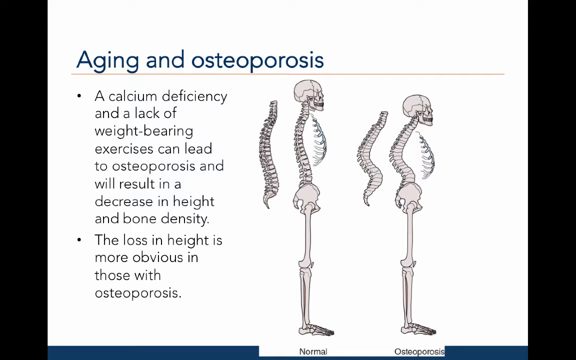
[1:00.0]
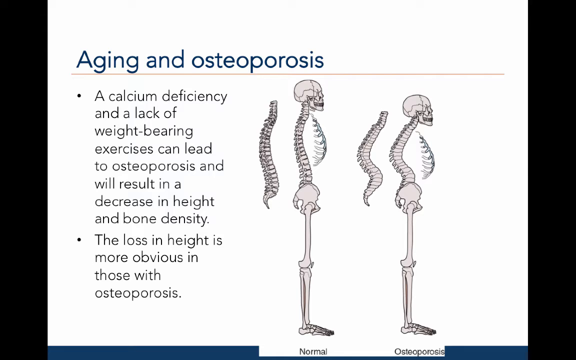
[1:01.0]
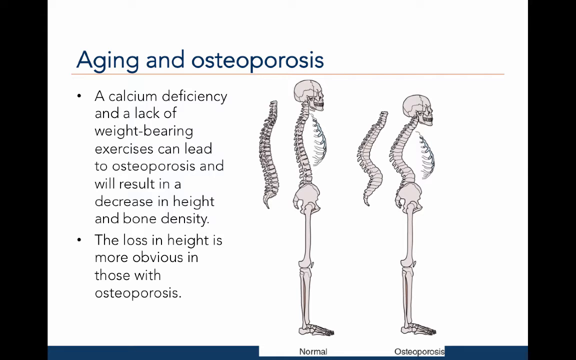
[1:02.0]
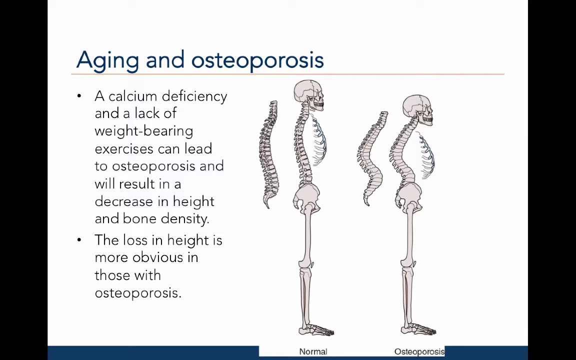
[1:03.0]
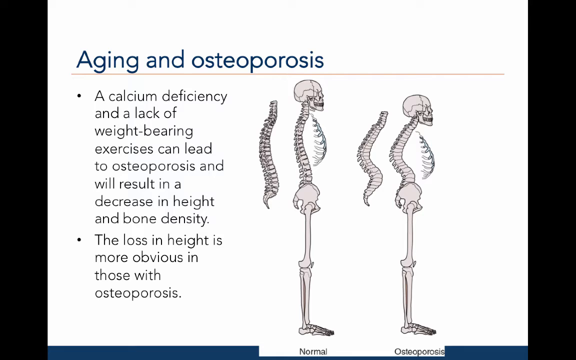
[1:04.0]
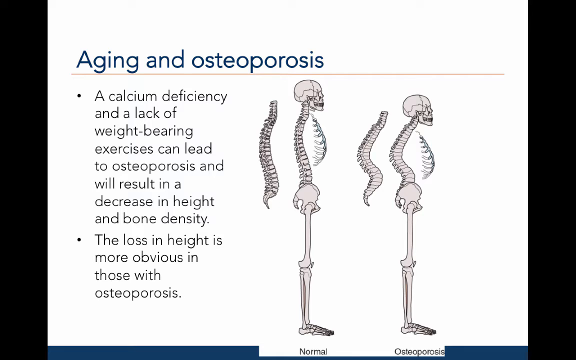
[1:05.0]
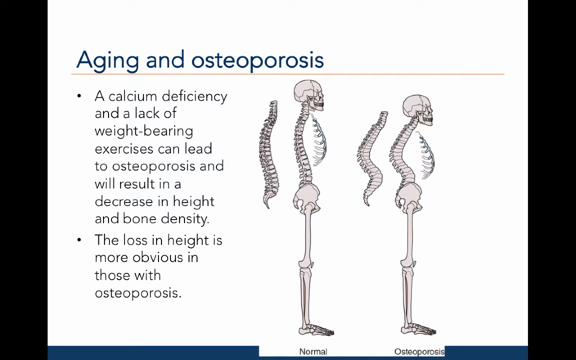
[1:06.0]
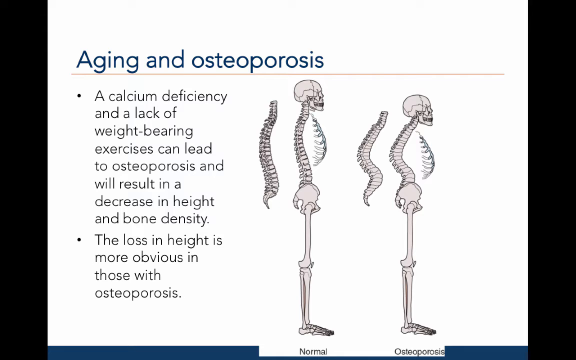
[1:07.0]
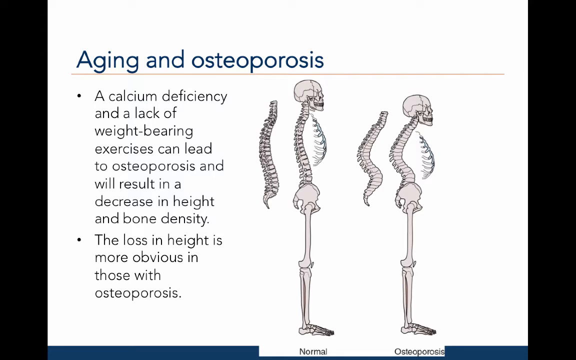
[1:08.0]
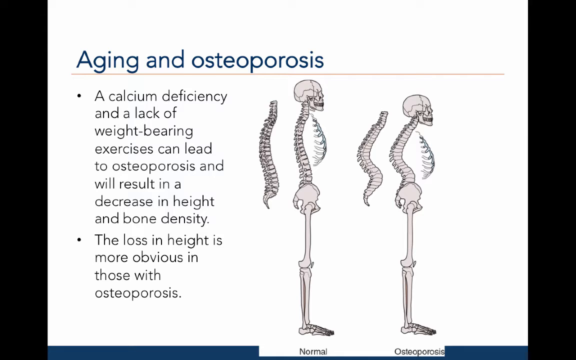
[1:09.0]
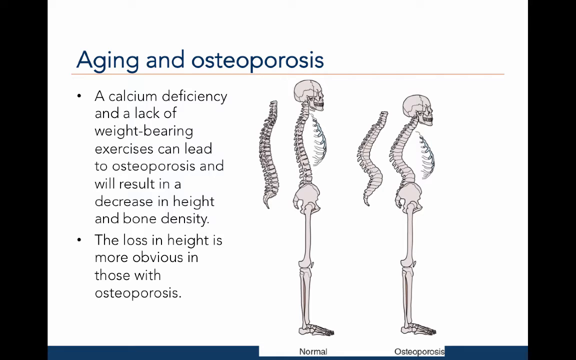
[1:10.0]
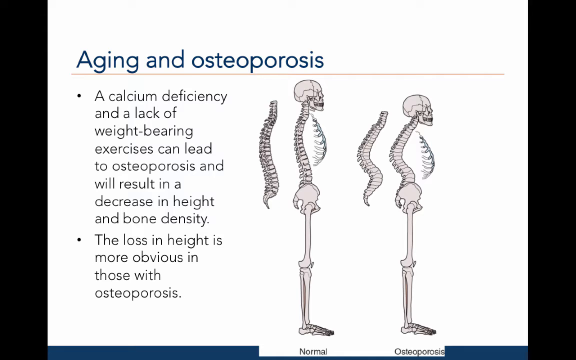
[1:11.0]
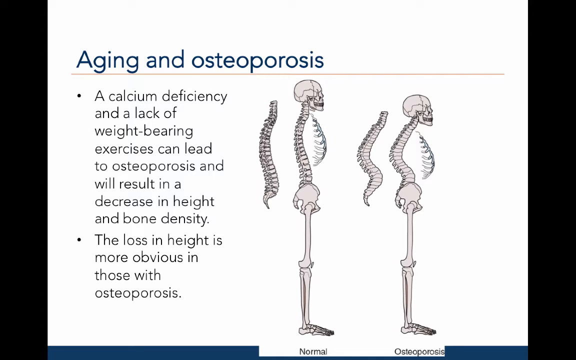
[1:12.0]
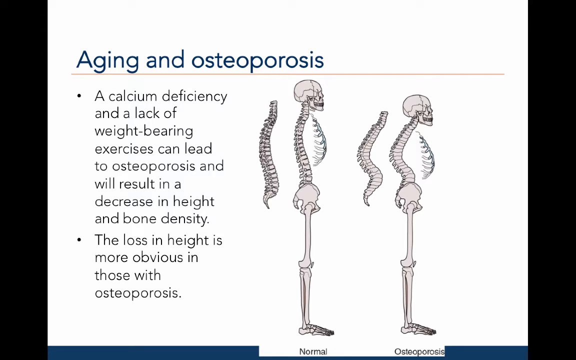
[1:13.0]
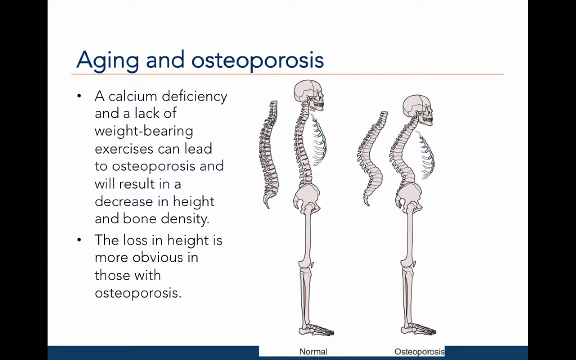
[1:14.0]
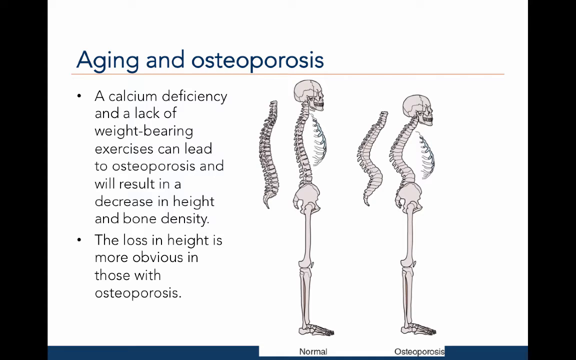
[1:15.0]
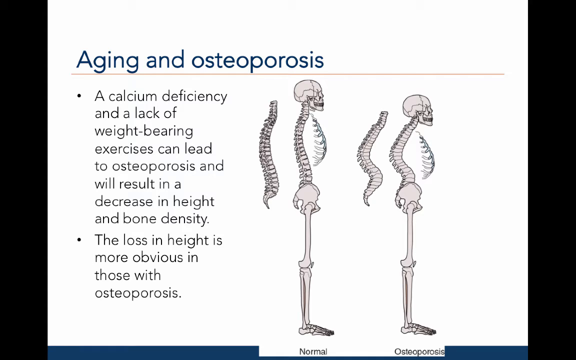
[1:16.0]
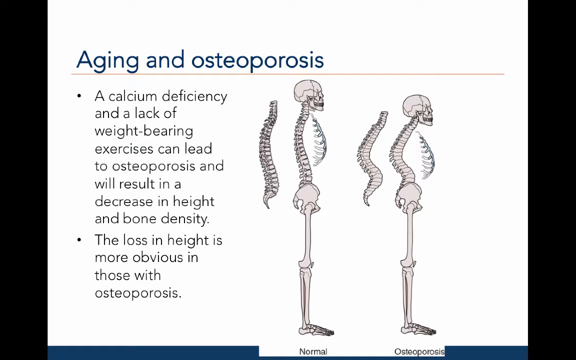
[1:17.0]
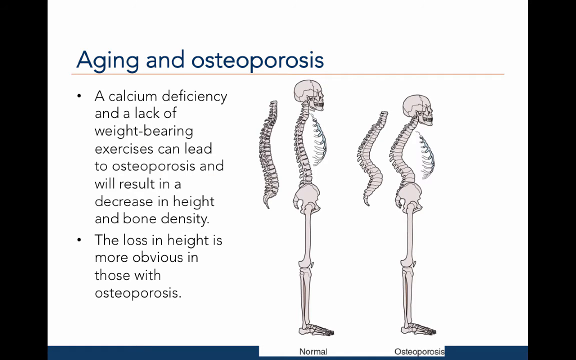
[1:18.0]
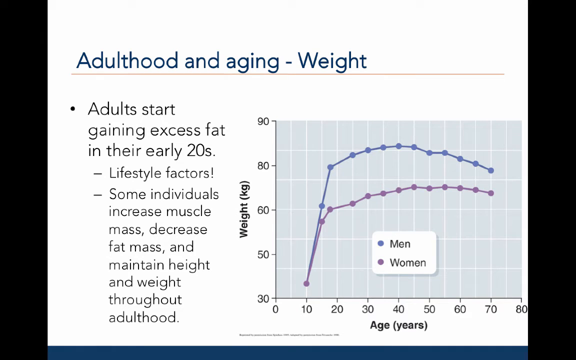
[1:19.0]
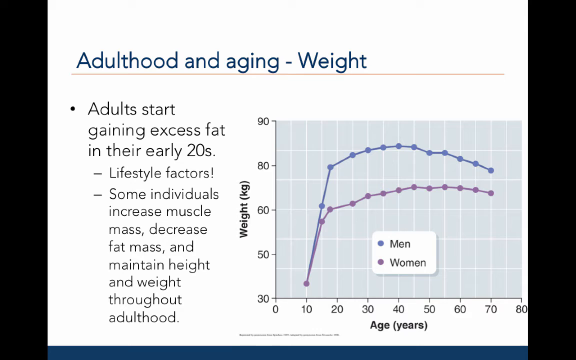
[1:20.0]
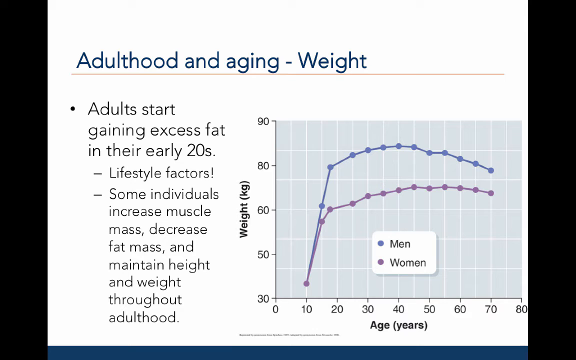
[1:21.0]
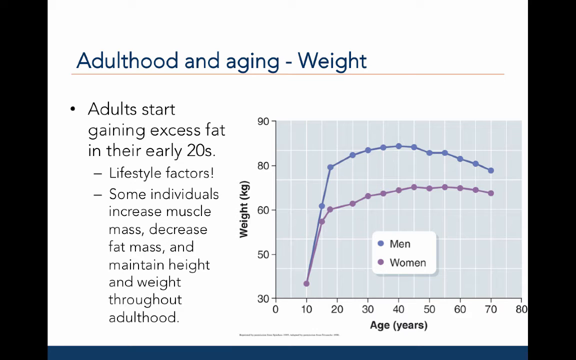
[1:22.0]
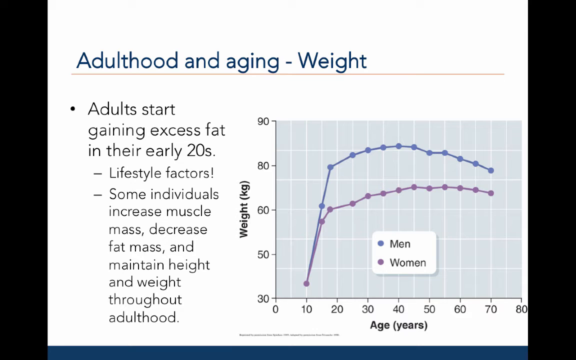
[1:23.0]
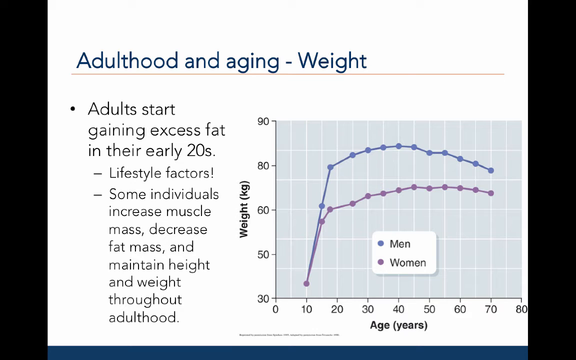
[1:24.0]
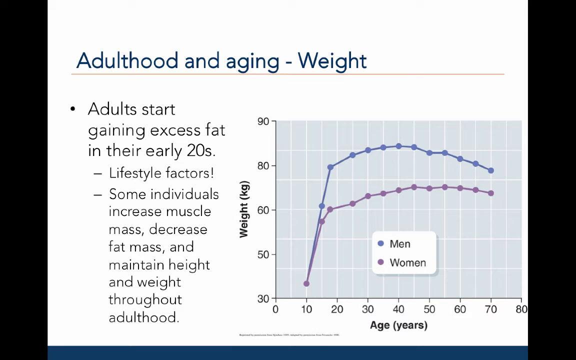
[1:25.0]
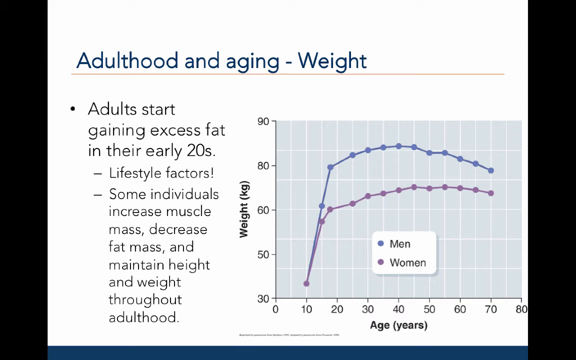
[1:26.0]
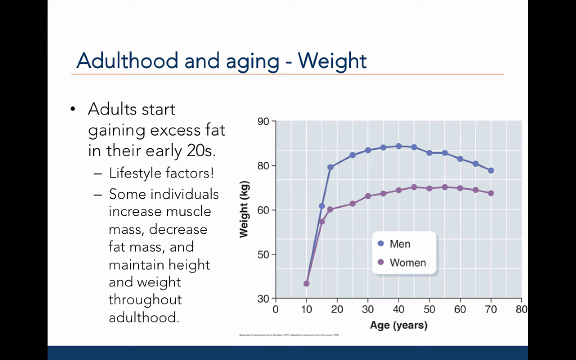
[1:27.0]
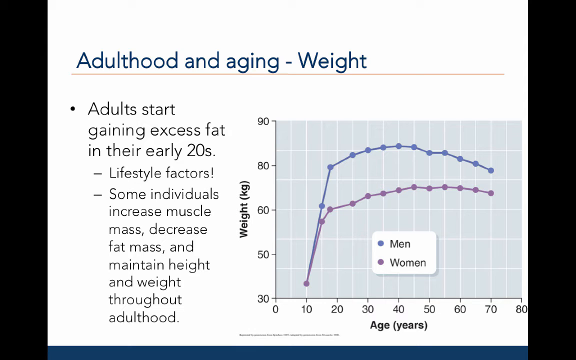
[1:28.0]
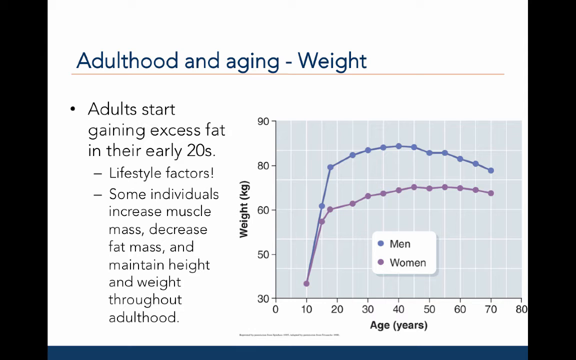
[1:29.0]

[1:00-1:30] The aging and osteoporosis text remains on screen, stating that a calcium deficiency and the lack of weight-bearing exercises can lead to osteoporosis and will result in a decrease in height and bone density, and that the loss in height is more obvious in those with osteoporosis. A diagram shows two skeletal structures with backbones: a normal one with a straight backbone and one with a crooked, bent backbone, apparently showing osteoporosis during aging. Next, under the adulthood and aging subtopic of weight, the text states that adults start gaining excess fat in their early twenties, mentions lifestyle factors, and says some individuals increase muscle mass, decrease fat mass and maintain height and weight throughout adulthood. A chart shows weight in kg ranging from 30 to 90 and age ranging from 0 to 80.